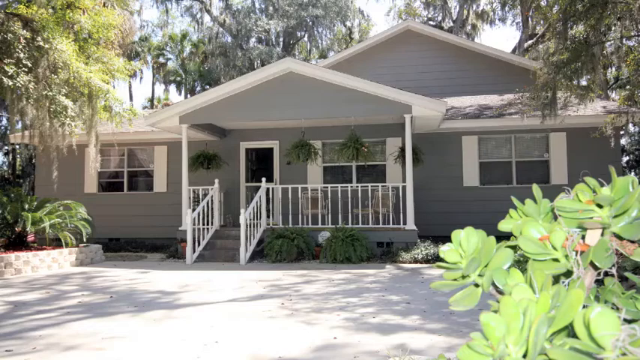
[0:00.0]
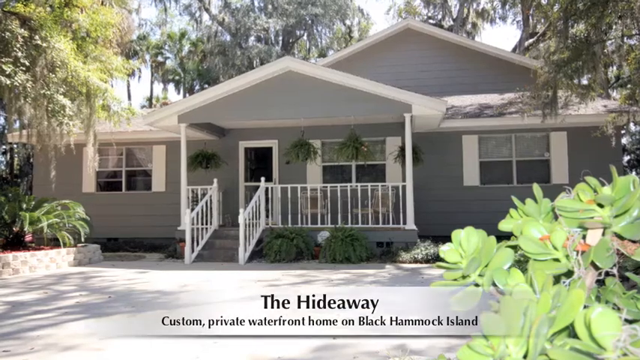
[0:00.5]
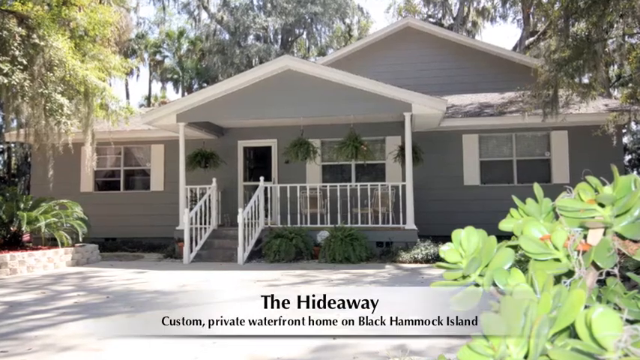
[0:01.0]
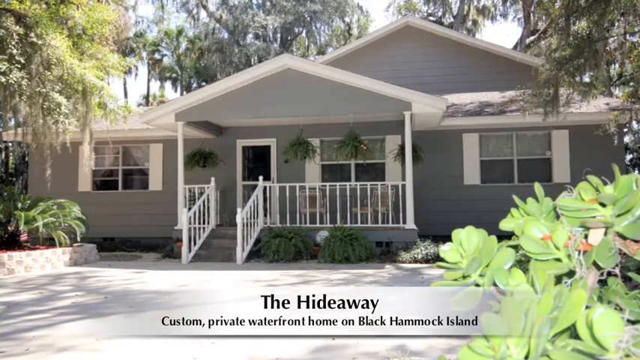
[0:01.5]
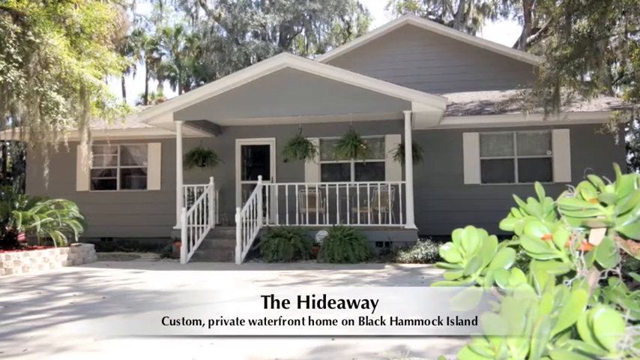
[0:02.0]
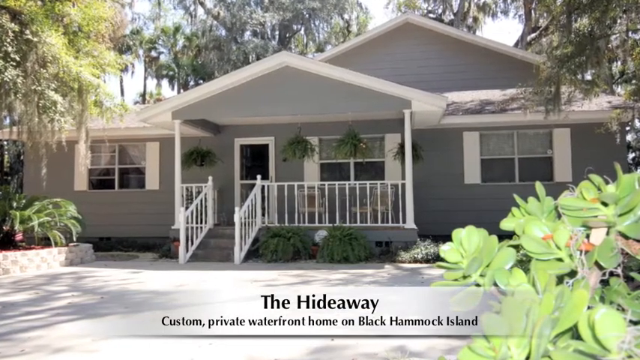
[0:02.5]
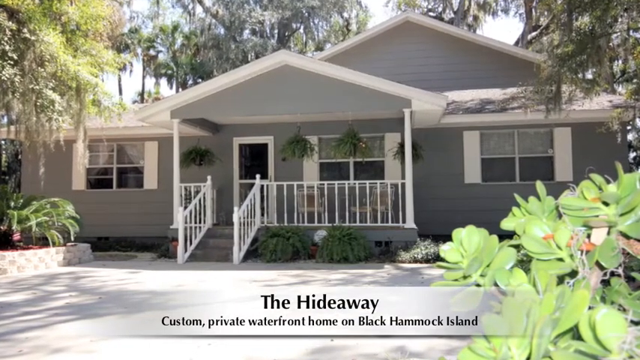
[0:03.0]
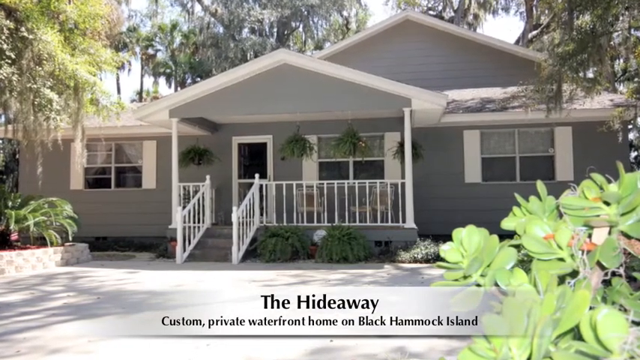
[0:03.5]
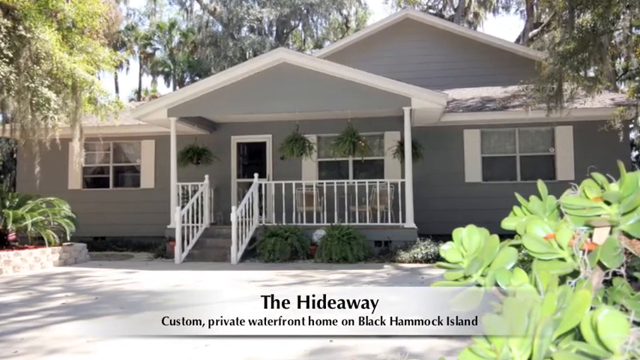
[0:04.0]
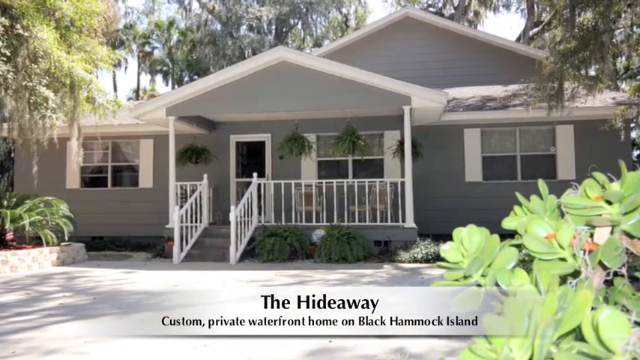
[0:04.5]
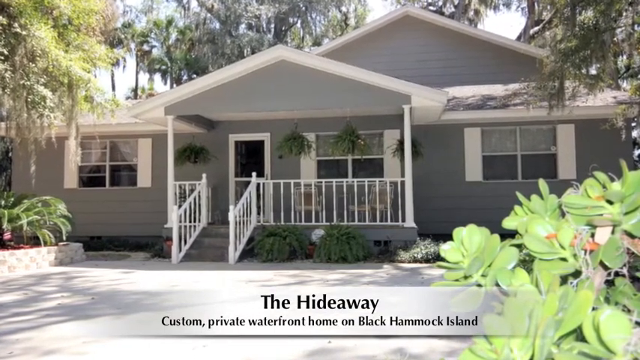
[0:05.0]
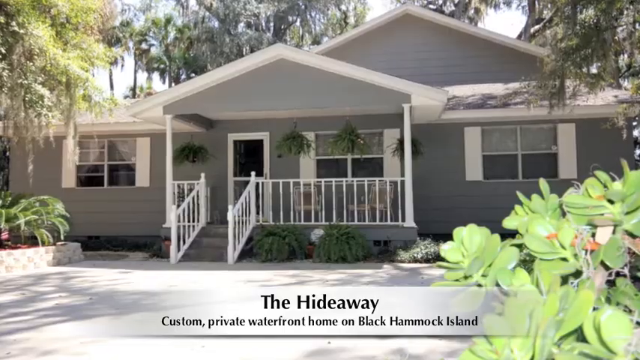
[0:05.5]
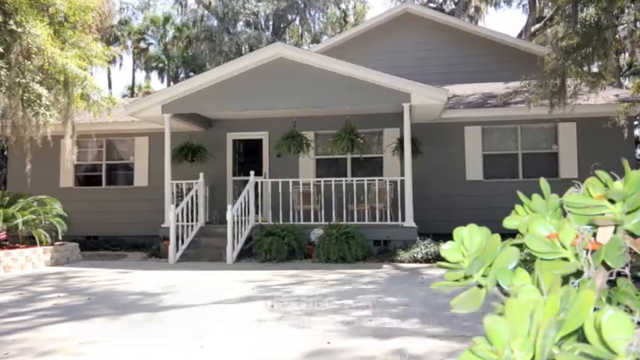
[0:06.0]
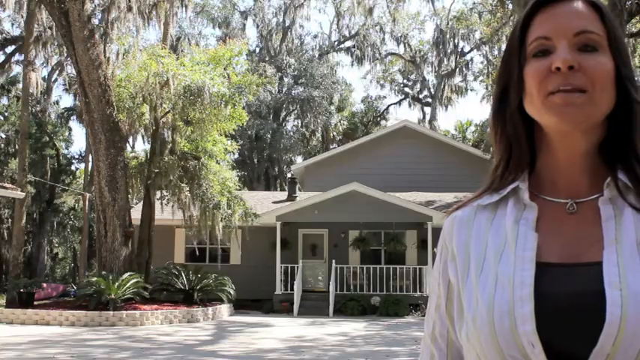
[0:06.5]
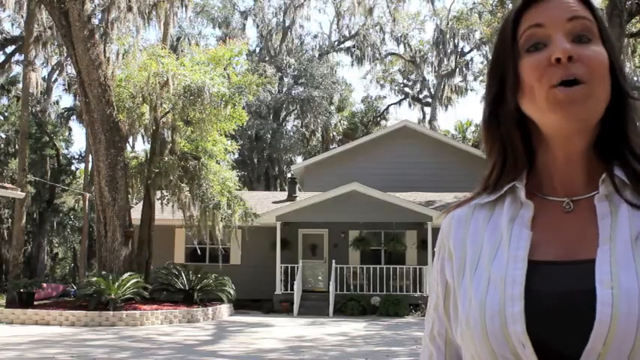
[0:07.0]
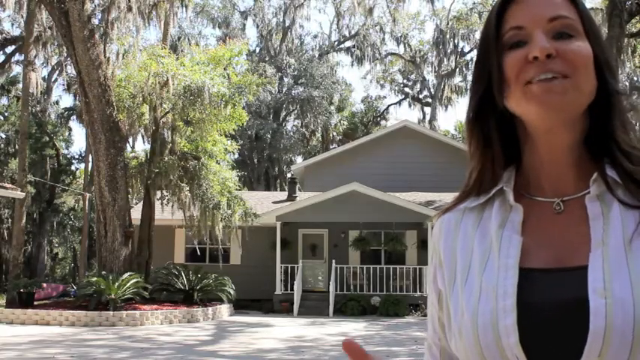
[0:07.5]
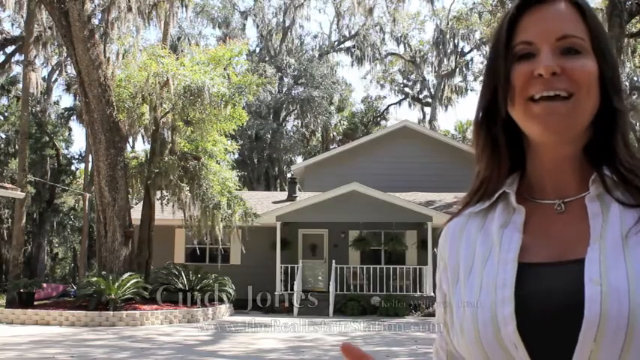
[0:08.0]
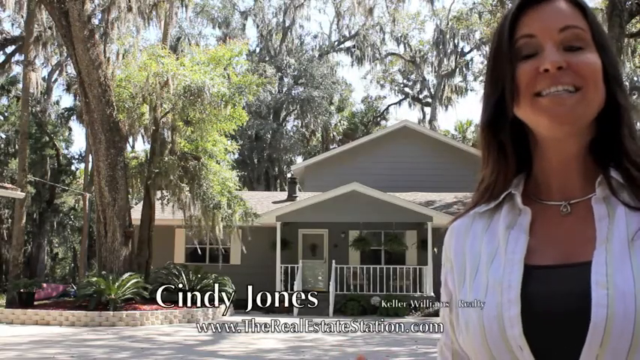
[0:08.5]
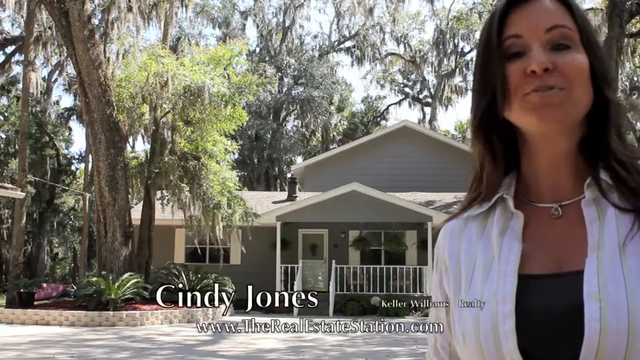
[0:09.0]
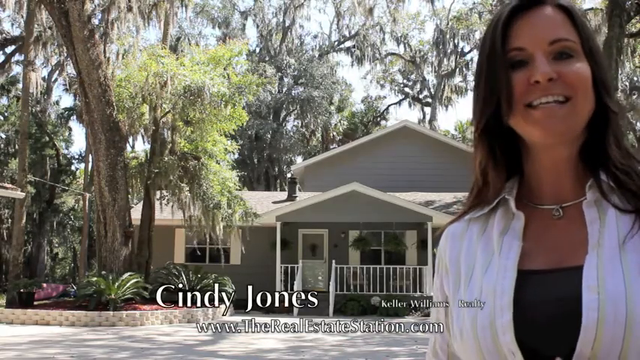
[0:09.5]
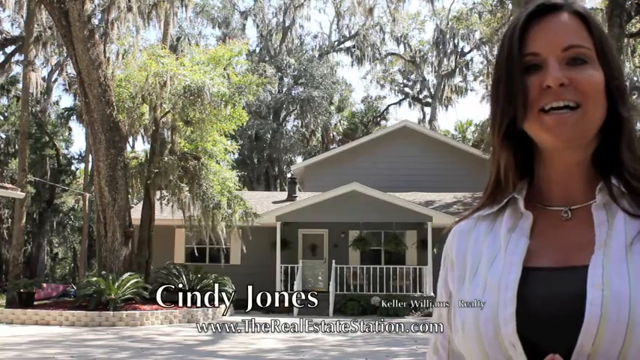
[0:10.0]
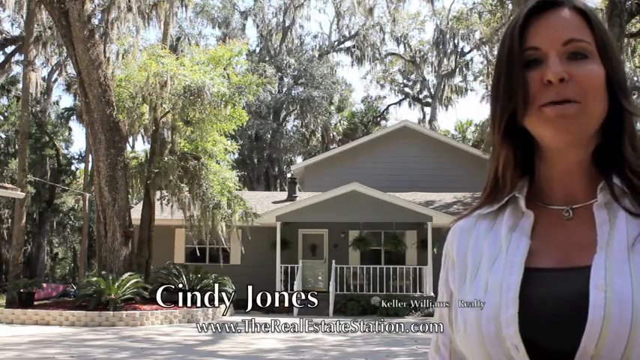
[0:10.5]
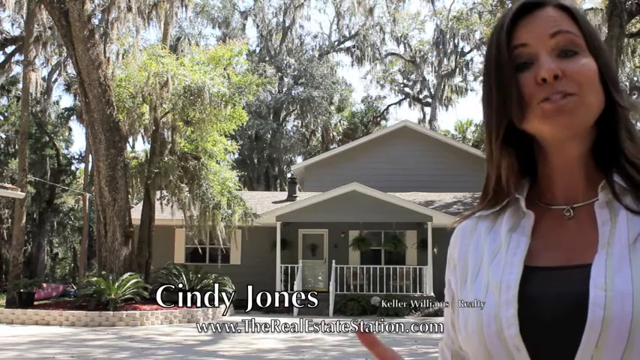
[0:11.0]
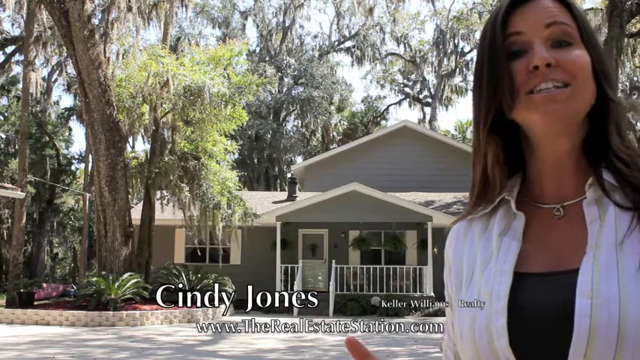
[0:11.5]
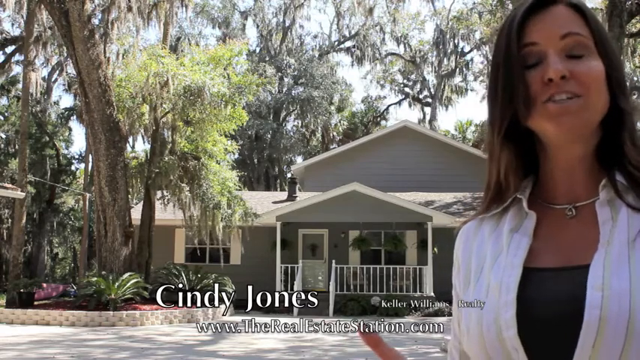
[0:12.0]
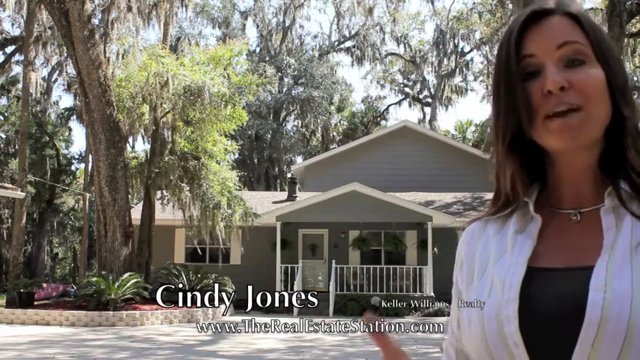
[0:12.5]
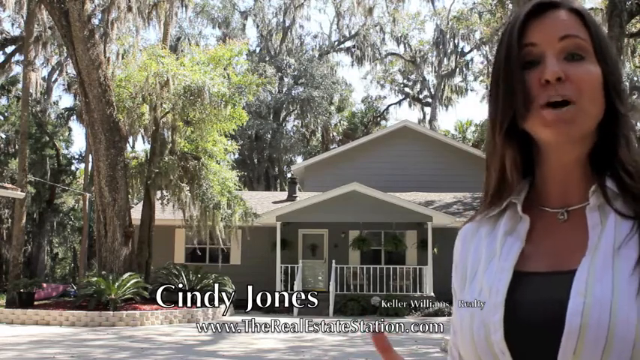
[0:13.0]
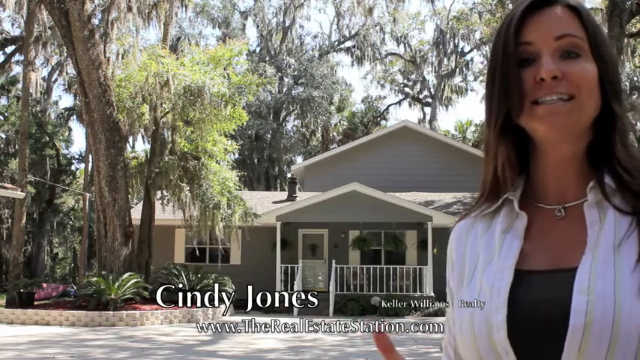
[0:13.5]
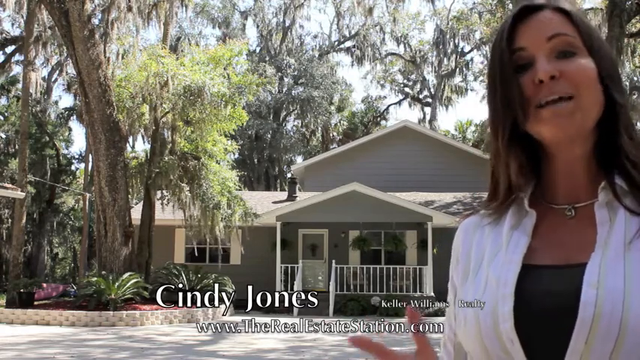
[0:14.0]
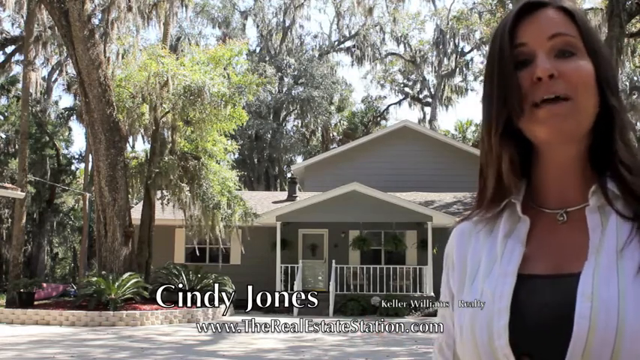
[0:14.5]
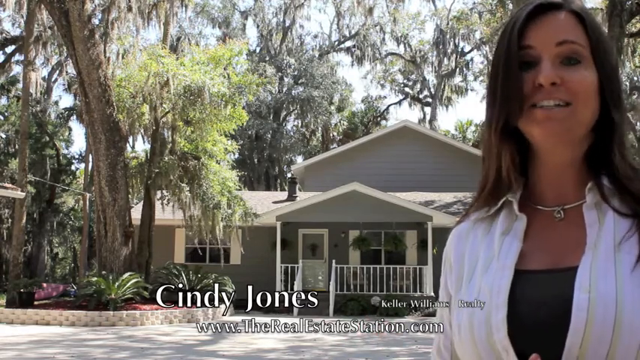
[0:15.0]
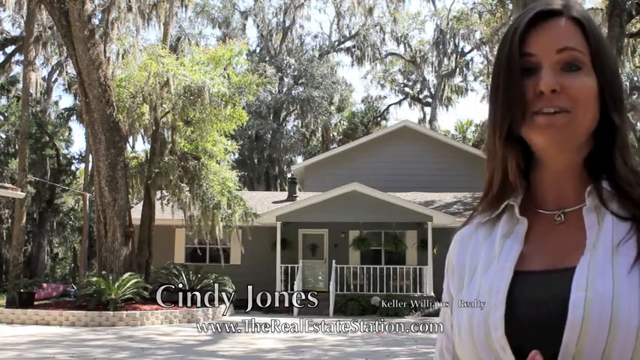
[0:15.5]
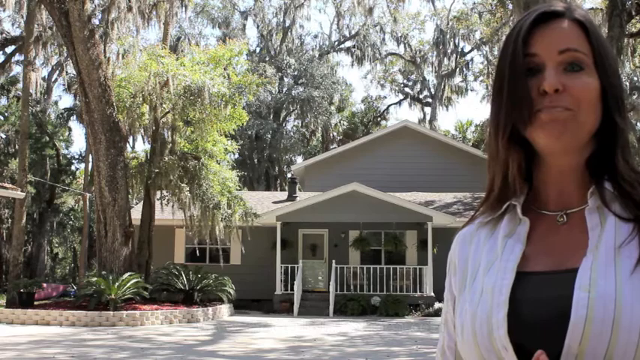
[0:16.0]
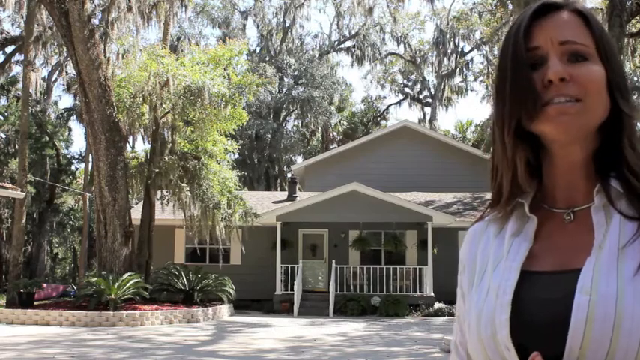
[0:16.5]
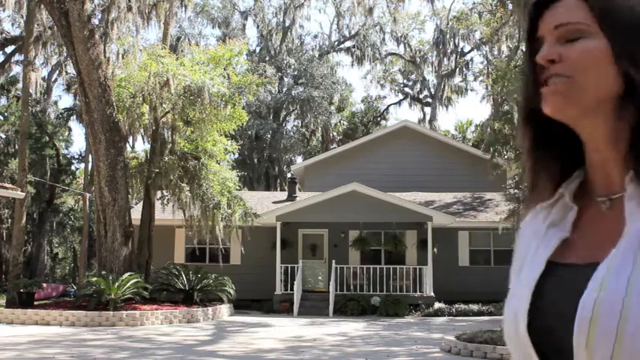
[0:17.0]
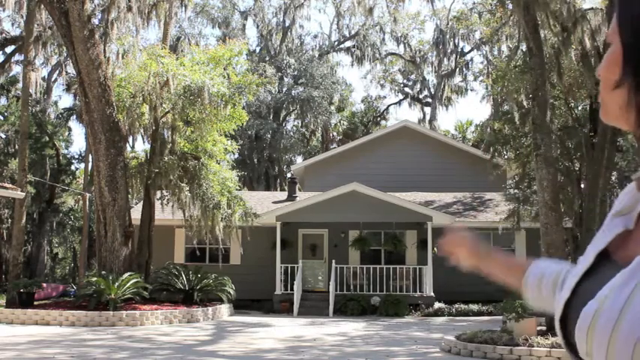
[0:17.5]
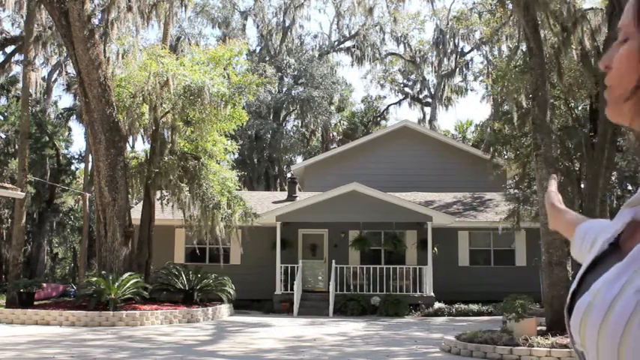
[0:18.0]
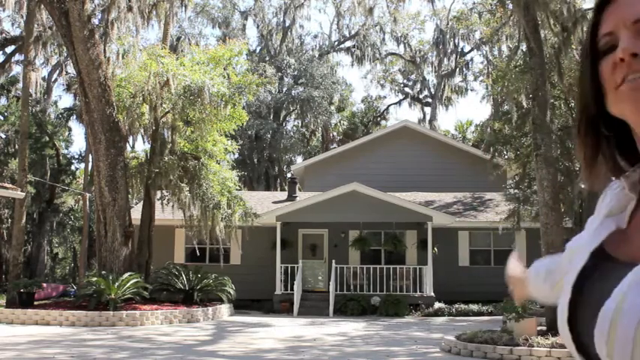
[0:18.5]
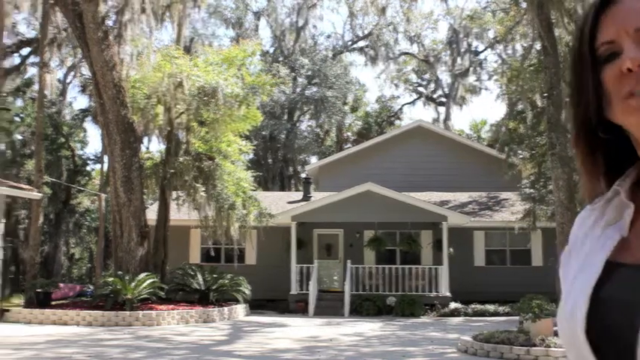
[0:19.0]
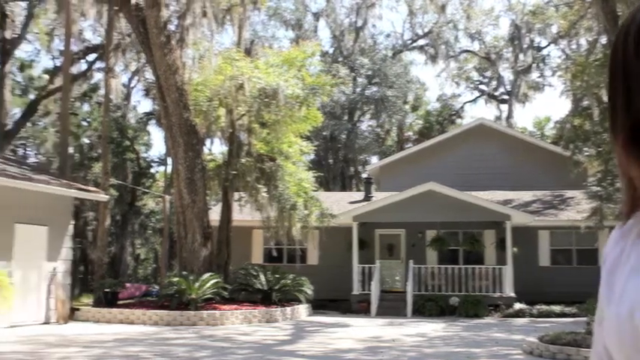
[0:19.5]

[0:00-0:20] The video opens on the approach, or forecourt, in front of a home. Text at the bottom of the screen reads "the hideaway", above text that says "custom private waterfront home on Black Hammock Island". Various trees and shrubs are about; the plant at the bottom right is apparently a succulent, and there are much larger, more established trees around. Steps lead up into the property, which has a white painted front fence railing. A young lady appears, wearing a white shirt open at the front over a black undershirt that reaches above chest height, and a necklace with some sort of design hanging from it. She smiles at the camera and is identified on screen as Cindy Jones of Keller Williams Realty, with "www.therealestatestation.com" below that. She is then further forward, at a different camera angle further to the left, which shows more of the left side of the waterfront retreat. She uses her right hand with fingers spread, then turns and gestures towards the property in the same manner, standing sideways on with her hand extended towards the property, fingers spread and thumb up. A garage parking facility comes into view.